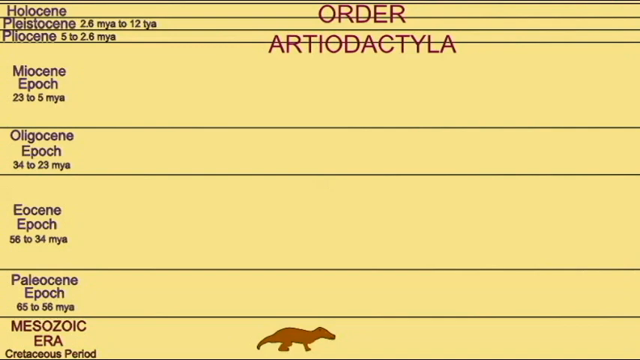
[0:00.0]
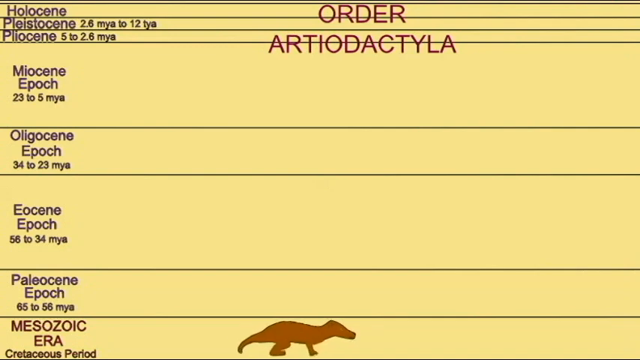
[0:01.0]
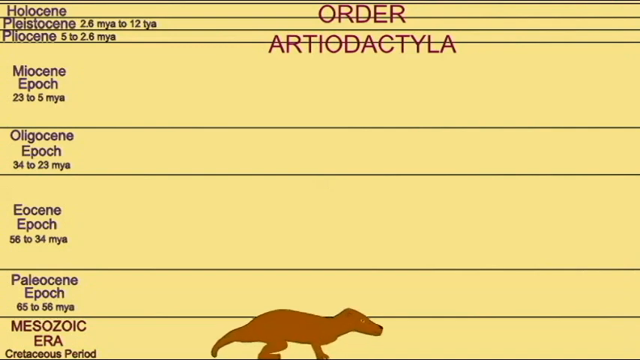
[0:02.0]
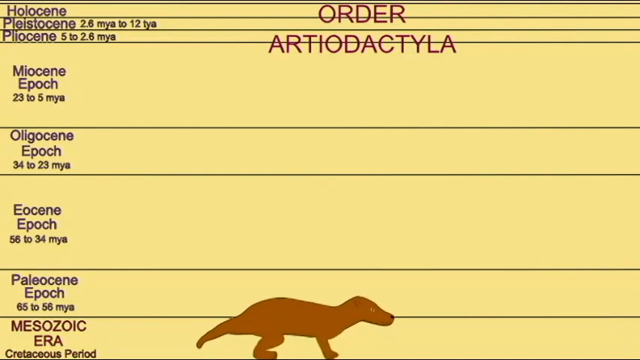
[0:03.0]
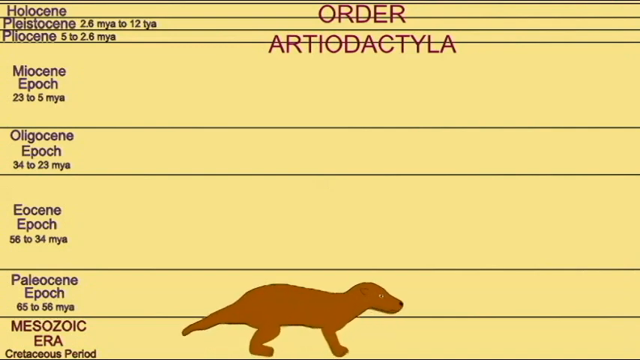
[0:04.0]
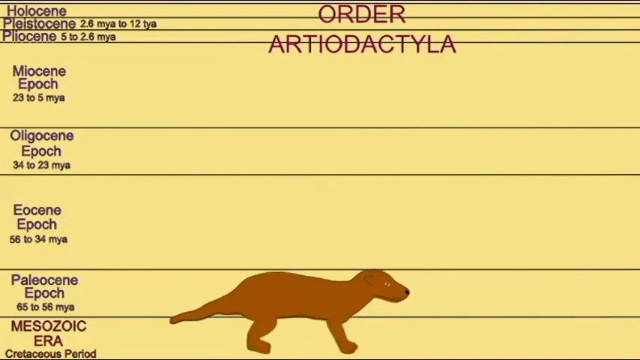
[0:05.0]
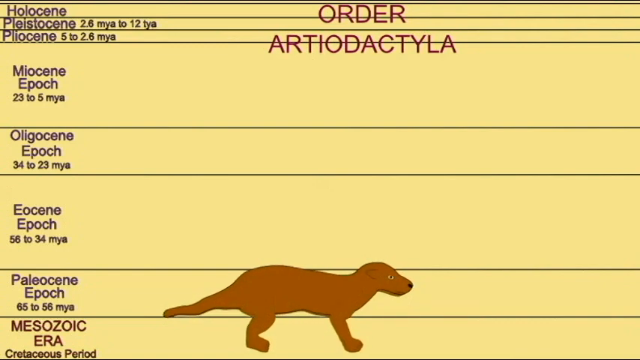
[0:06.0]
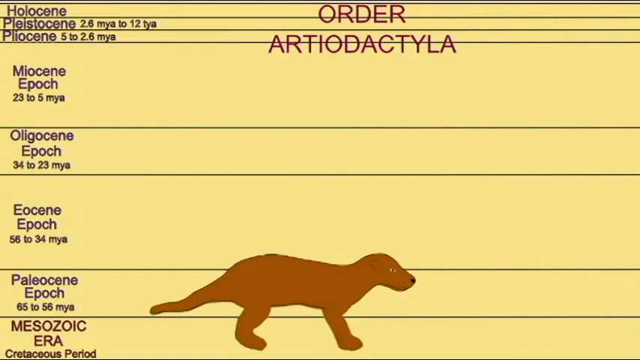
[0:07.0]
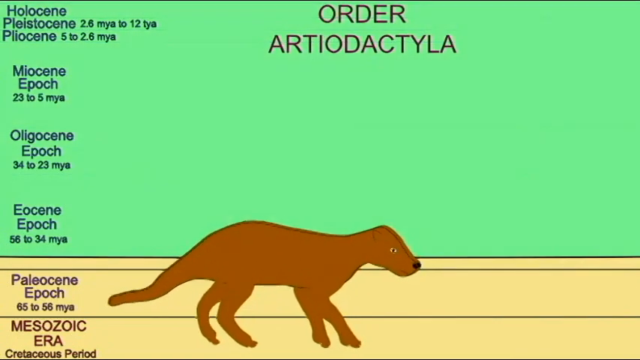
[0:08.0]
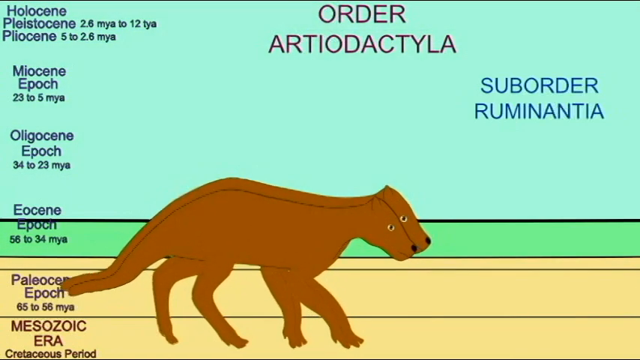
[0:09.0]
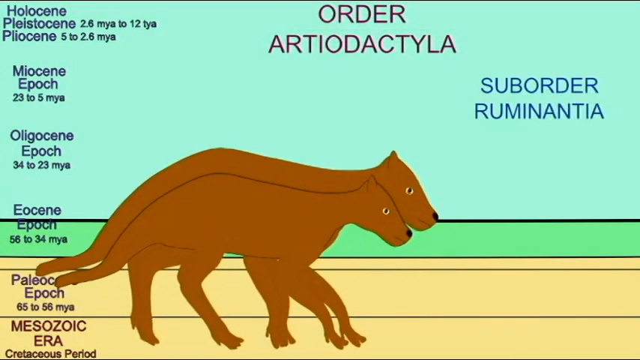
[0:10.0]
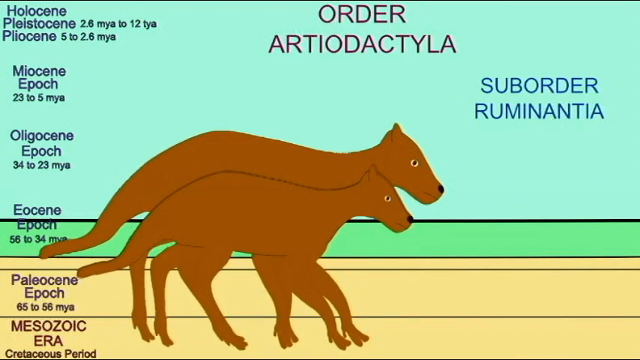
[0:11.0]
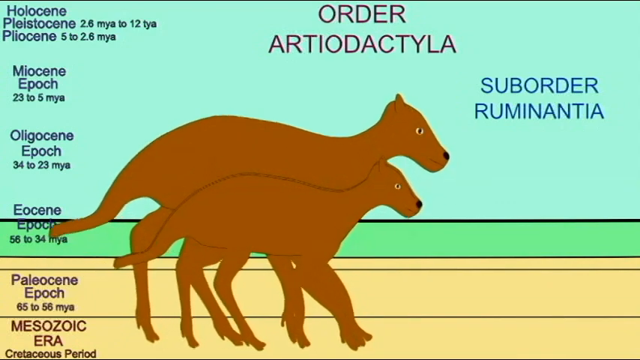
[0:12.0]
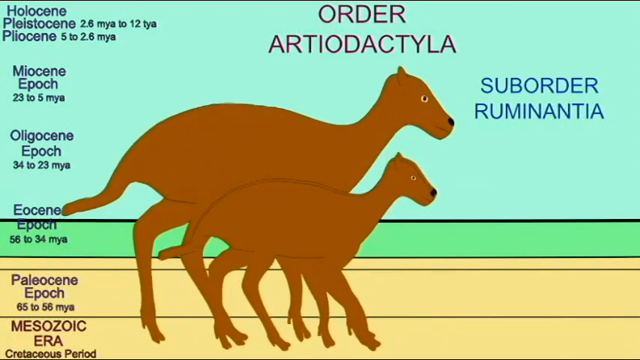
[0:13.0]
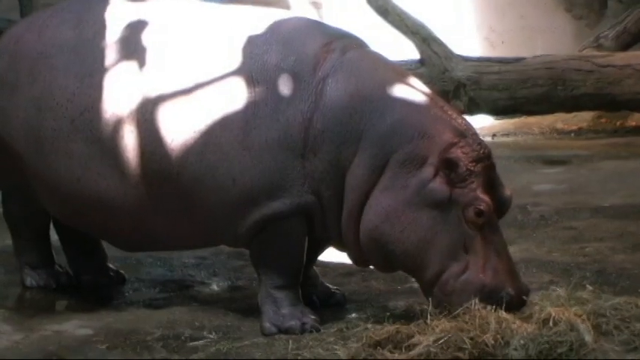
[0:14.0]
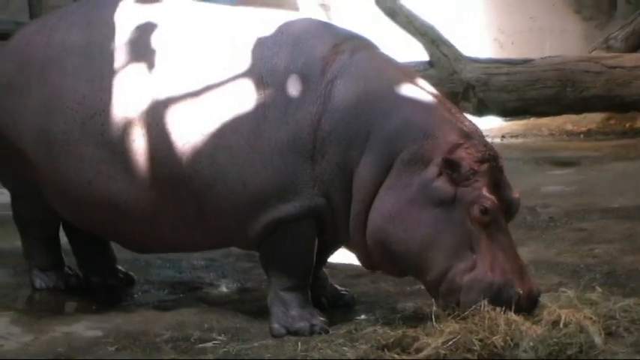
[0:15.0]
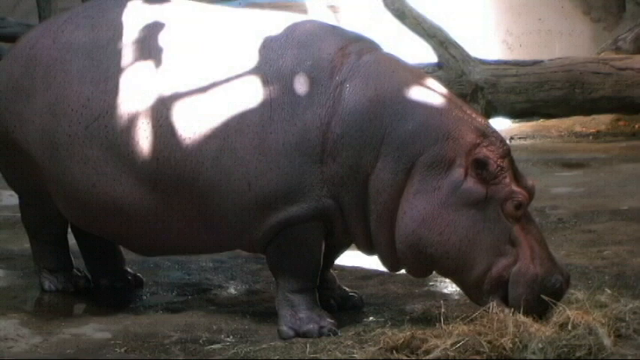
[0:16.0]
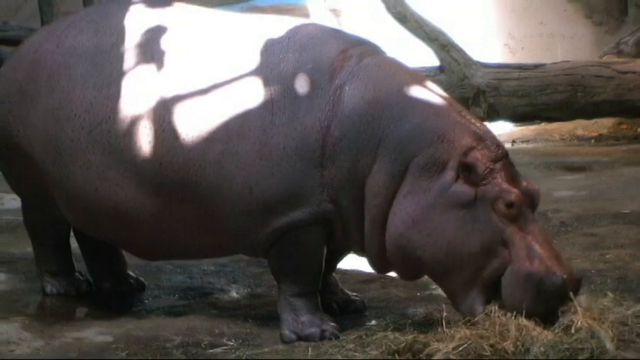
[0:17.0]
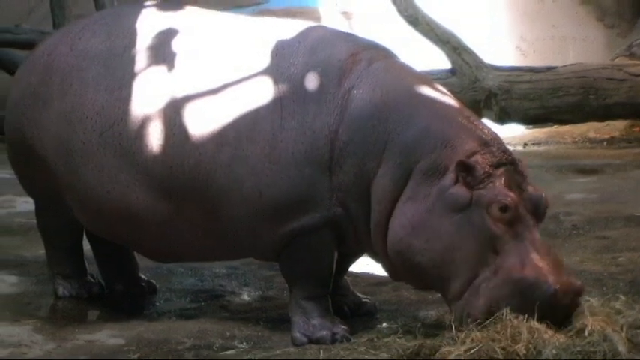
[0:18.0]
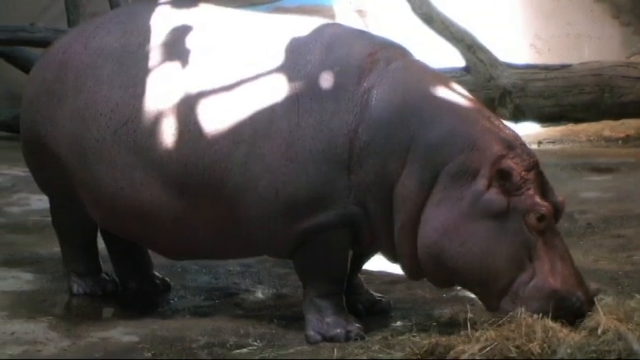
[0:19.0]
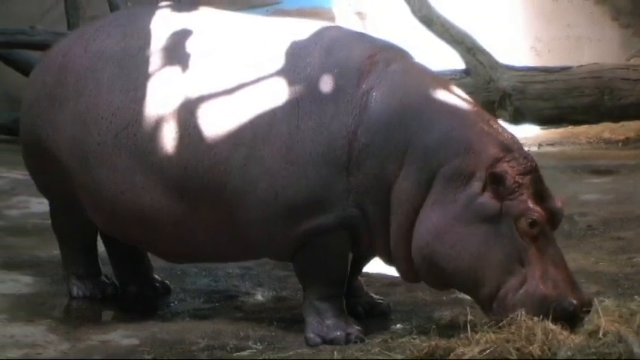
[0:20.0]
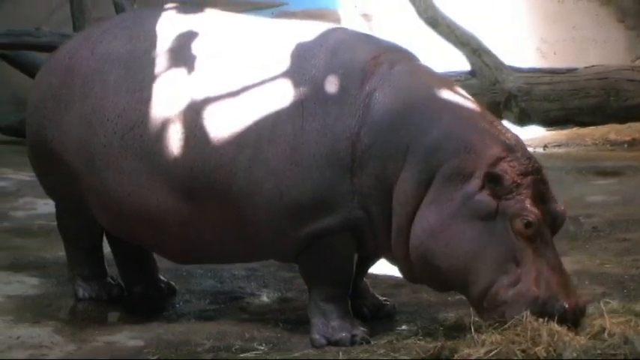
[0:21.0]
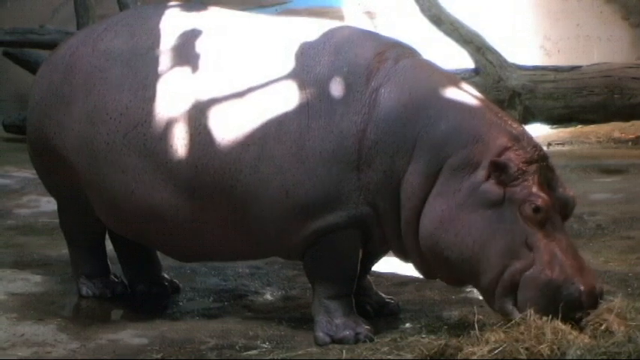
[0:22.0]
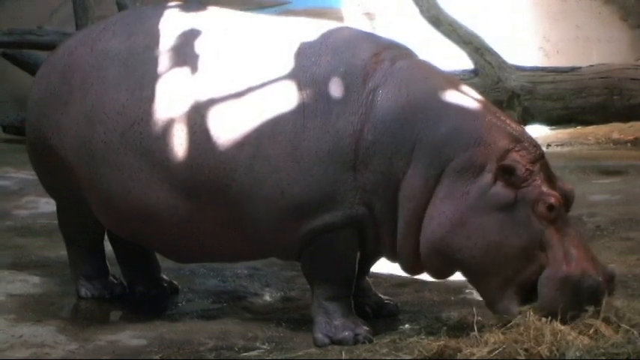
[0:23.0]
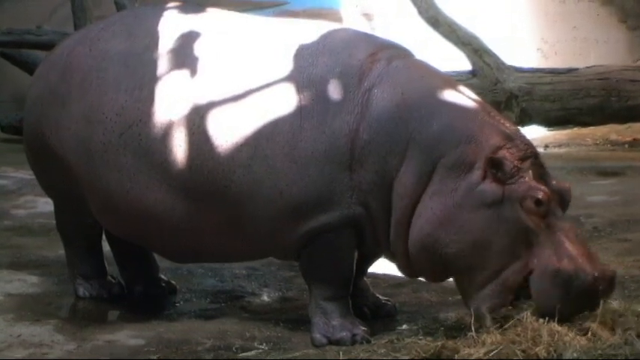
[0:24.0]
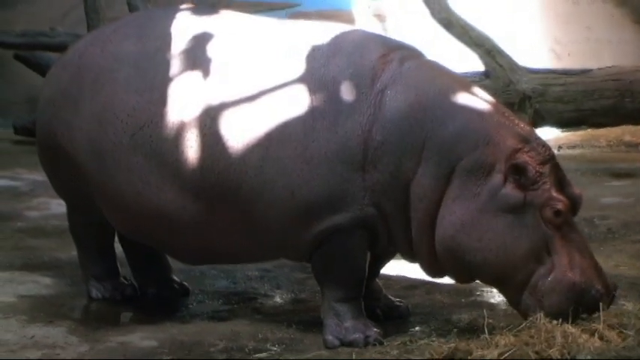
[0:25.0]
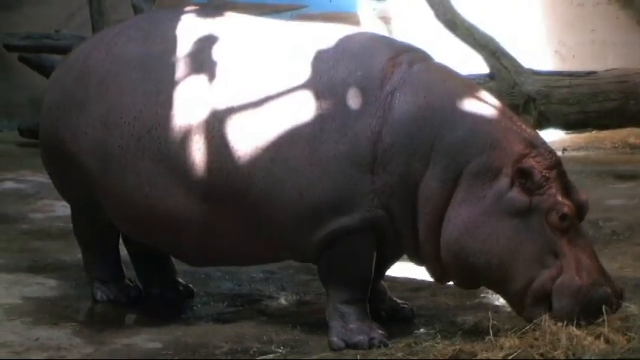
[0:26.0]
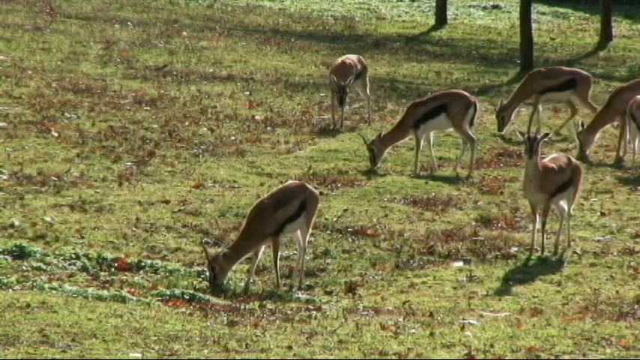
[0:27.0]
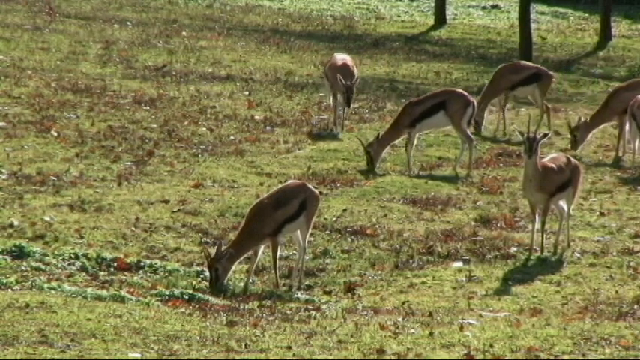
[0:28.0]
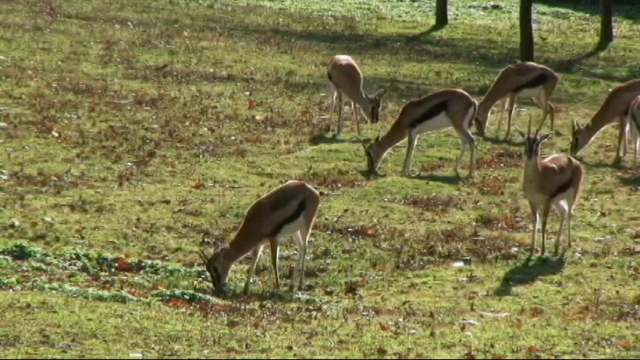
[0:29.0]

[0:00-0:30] The video looks almost like some kind of presentation. There is text in the background, and in the foreground is what looks like an animal, apparently brown, changing in size from small to large. The title in the upper center reads "order RTO dactyla." On the left is text, likely information about it, that says "halosine," with "myosine epoch" under that, and then "eosine epoch," and something on screen grows larger and larger. The background then turns green, and there are now two of the brown animals. New text appears on the right side that says "suborder ruminantia," and the animals continue to get larger. The video then cuts to footage of hippopotamuses eating. One of them is turned towards the right side of the camera, chomping down on something on the grass, with branches behind him. He is likely in a zoo or something similar.